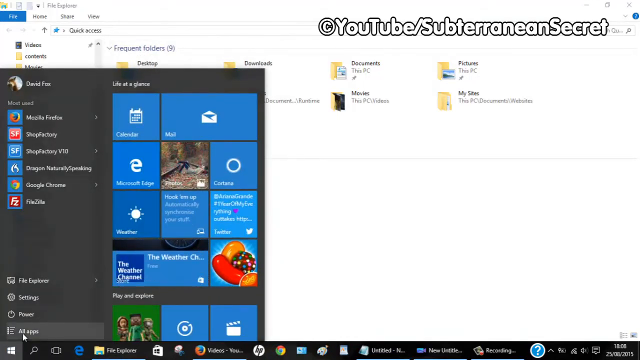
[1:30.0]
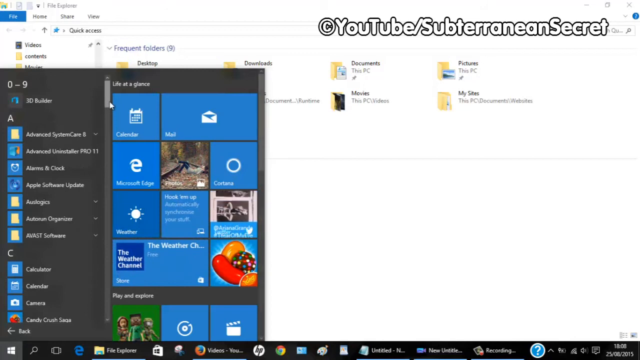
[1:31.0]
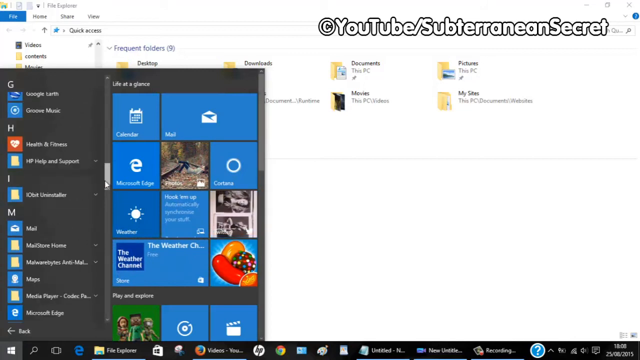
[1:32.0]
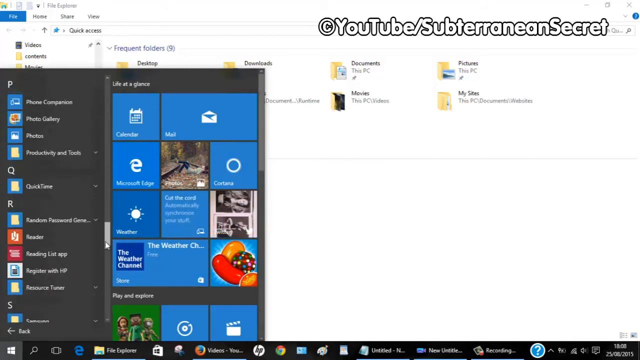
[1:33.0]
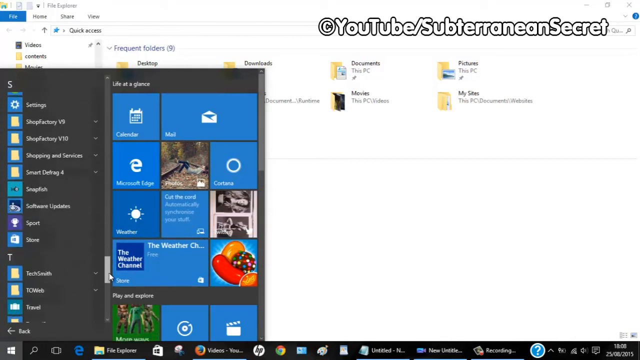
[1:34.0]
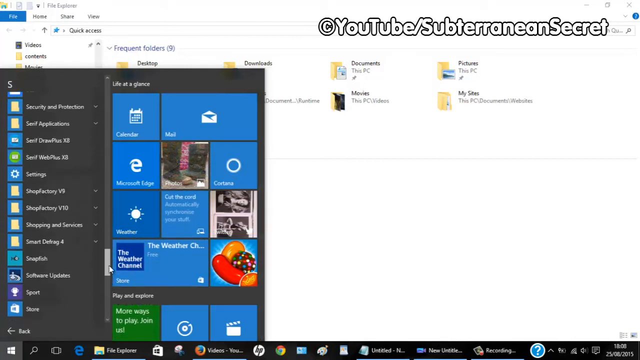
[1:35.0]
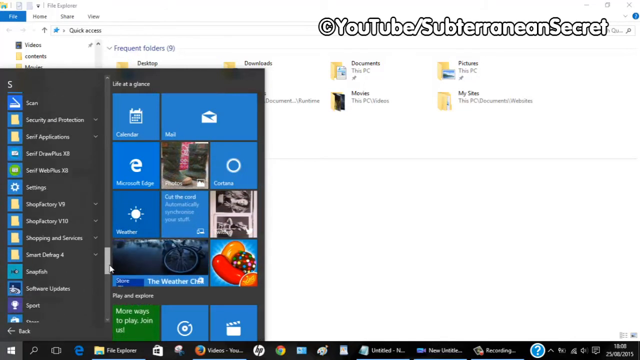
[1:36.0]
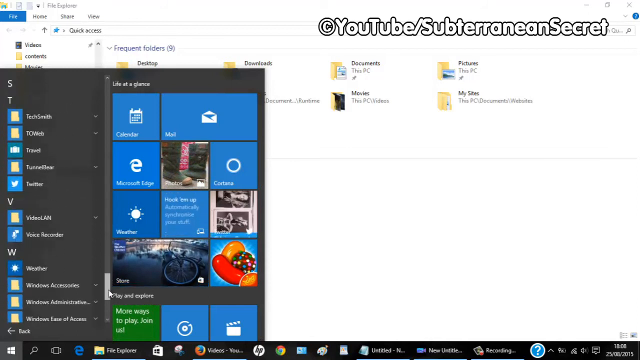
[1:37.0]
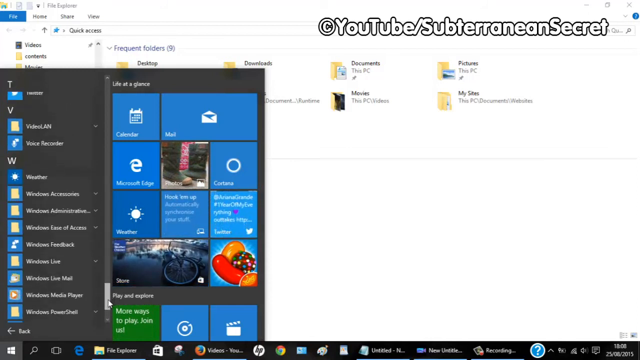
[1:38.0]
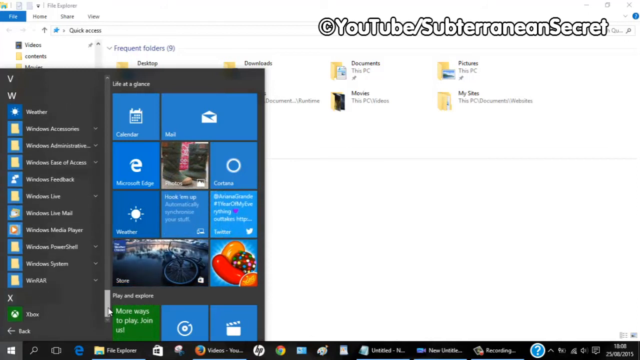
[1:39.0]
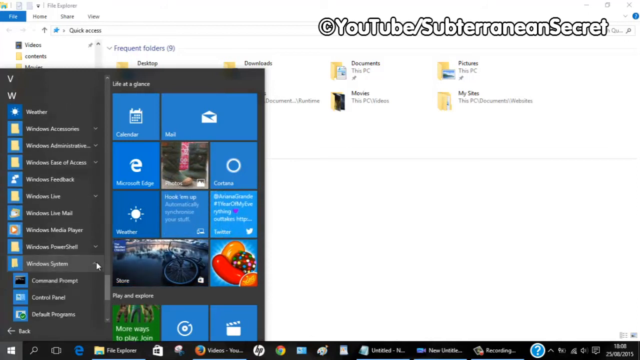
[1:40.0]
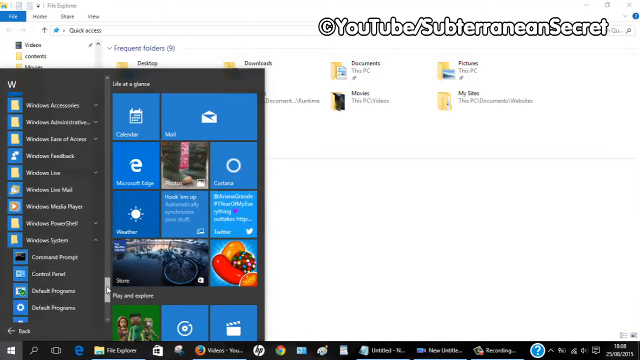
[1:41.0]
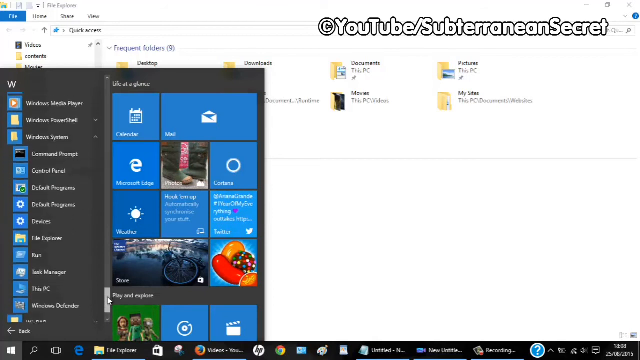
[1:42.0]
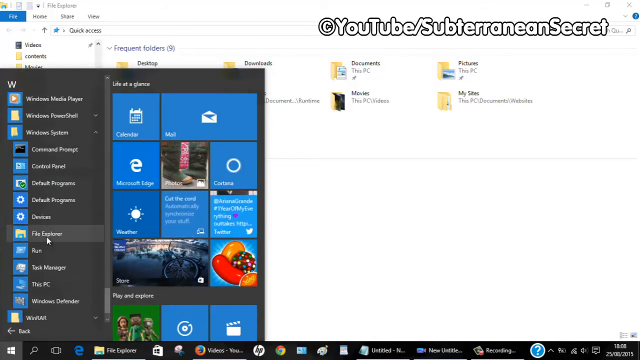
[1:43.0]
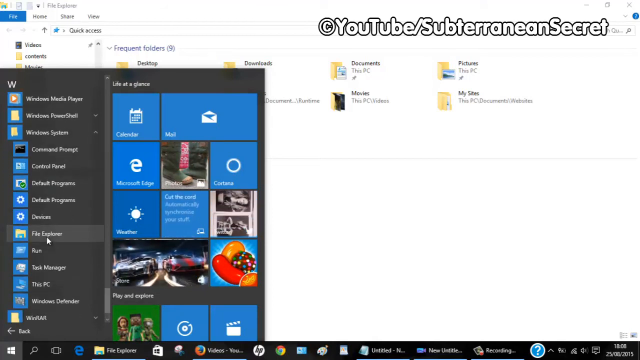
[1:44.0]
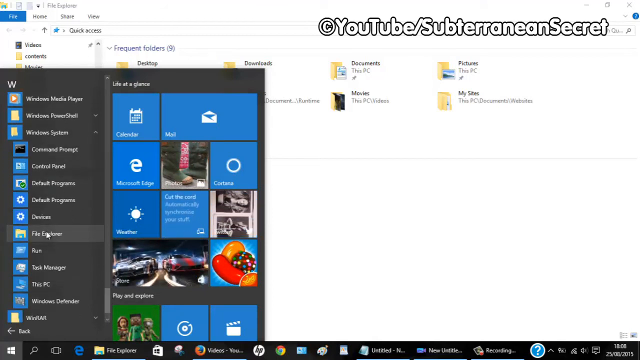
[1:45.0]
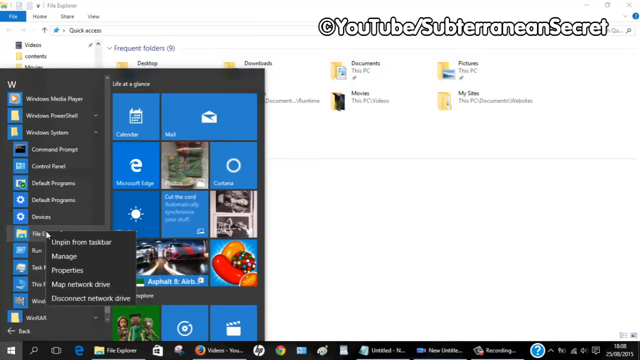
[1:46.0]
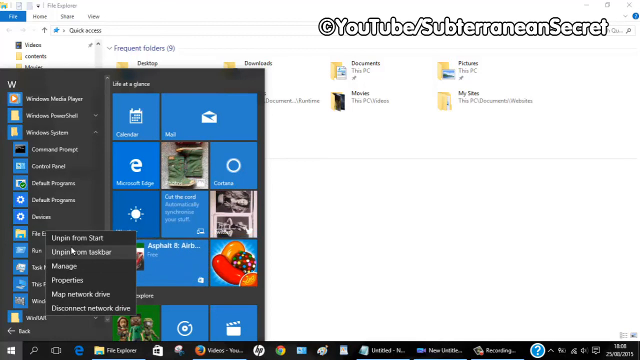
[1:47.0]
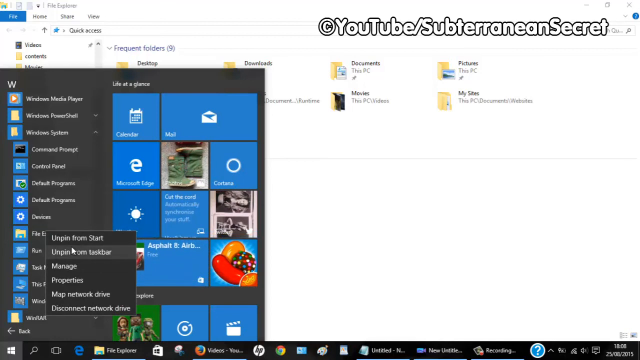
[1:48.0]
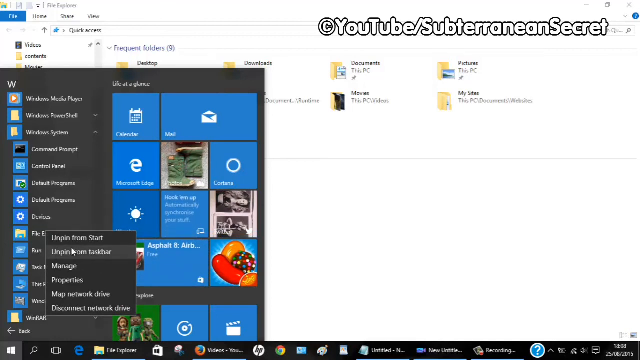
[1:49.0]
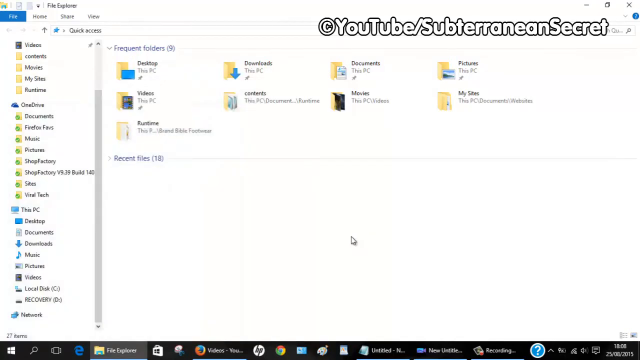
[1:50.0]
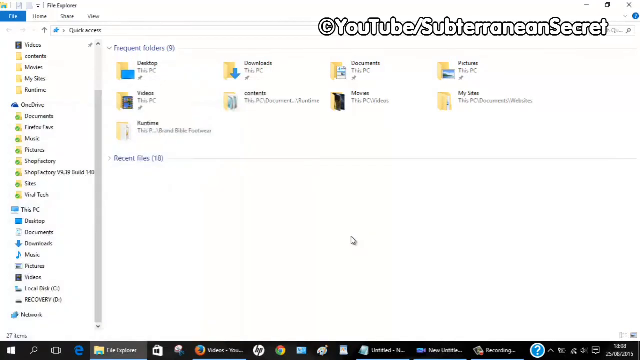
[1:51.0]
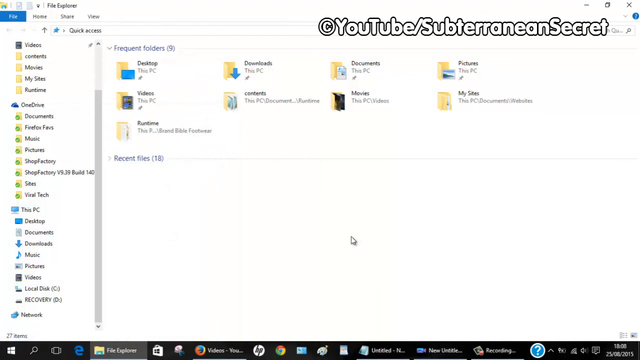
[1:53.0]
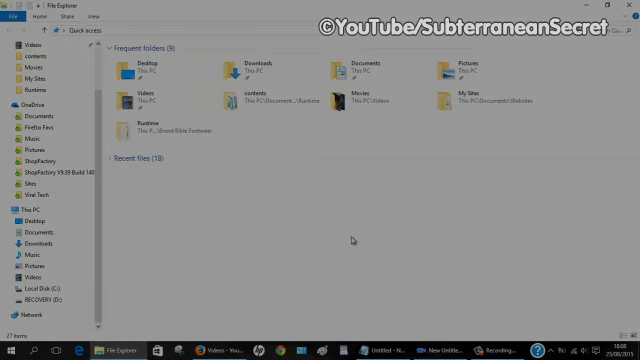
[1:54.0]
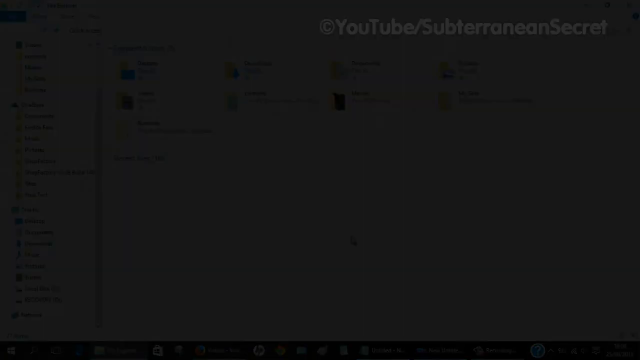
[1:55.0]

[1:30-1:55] The Windows icon at the bottom left of the screen is clicked, and the menu on the left is scrolled down with the vertical scroll bar from A all the way to S and then past S to W. The window systems tab is clicked, then the menu is scrolled further and file explorer is clicked. A right-click opens a small menu of six items, and the second item, unpin from taskbar, is selected. The other options are unpin from start, manage, properties, map network drive, and a sixth option obscured by the time remaining on the video. All the while, white text with a black outline in the top right corner shows the copyright logo and "YouTube/subterranean secret," the YouTube creator of this content on how to find out how much hard drive space is left in Windows 10.